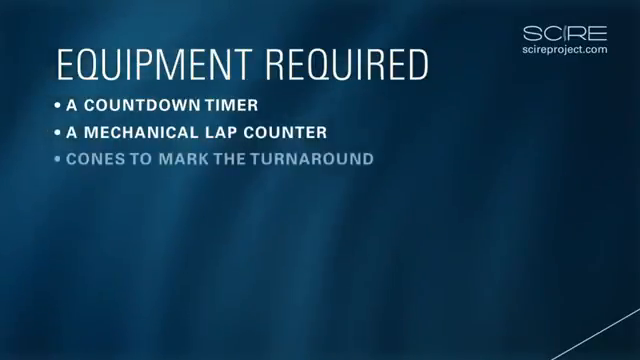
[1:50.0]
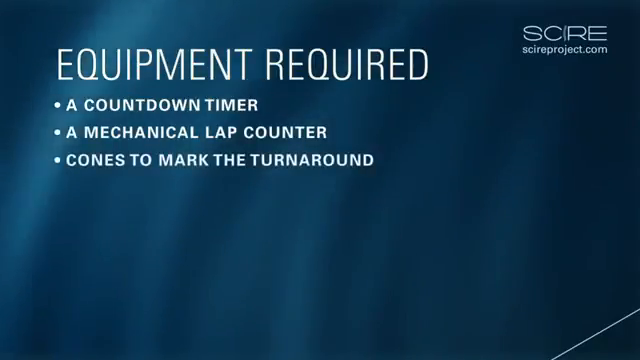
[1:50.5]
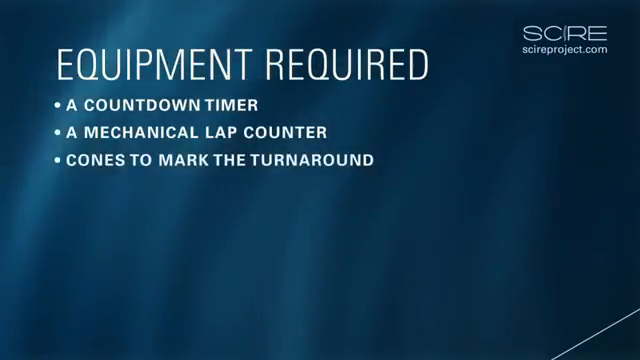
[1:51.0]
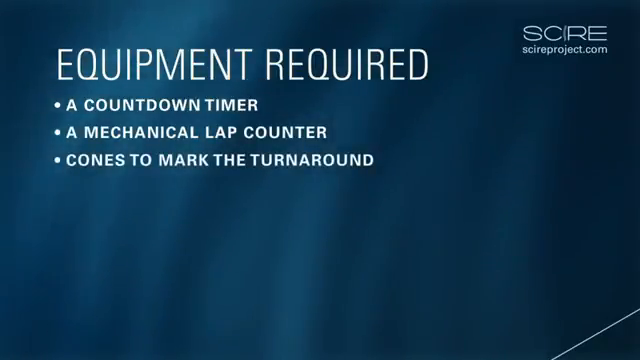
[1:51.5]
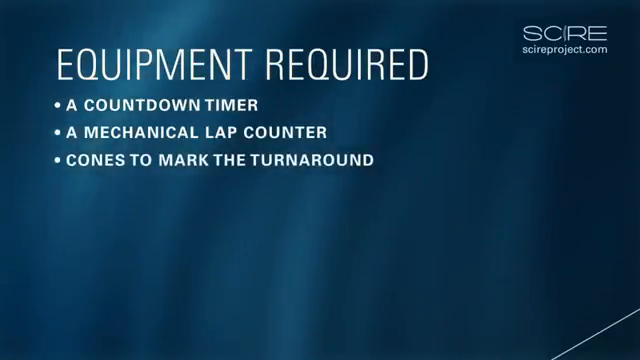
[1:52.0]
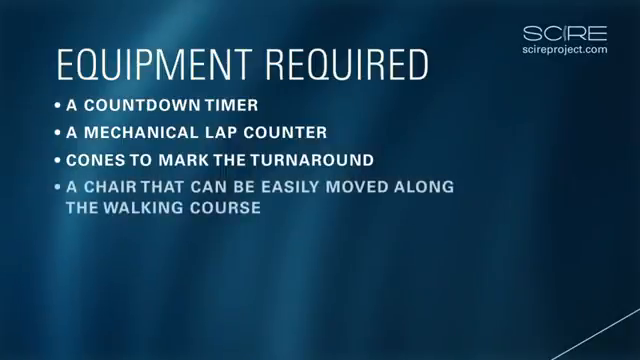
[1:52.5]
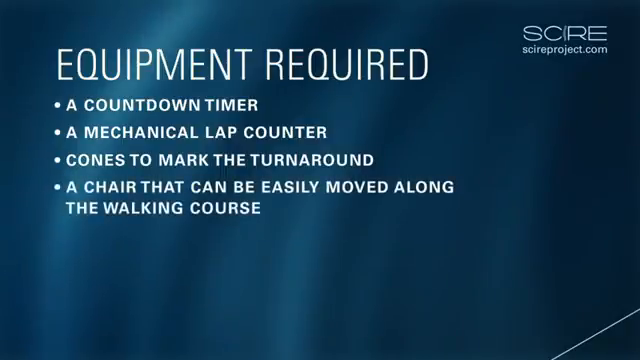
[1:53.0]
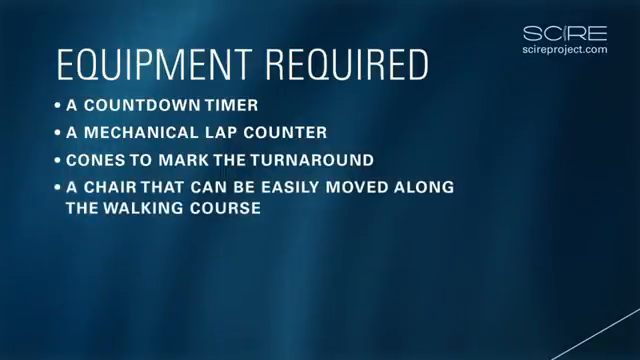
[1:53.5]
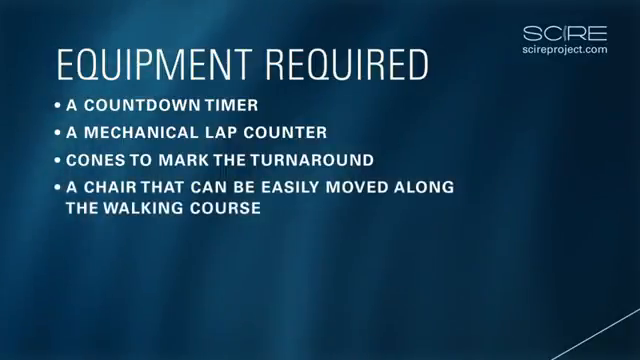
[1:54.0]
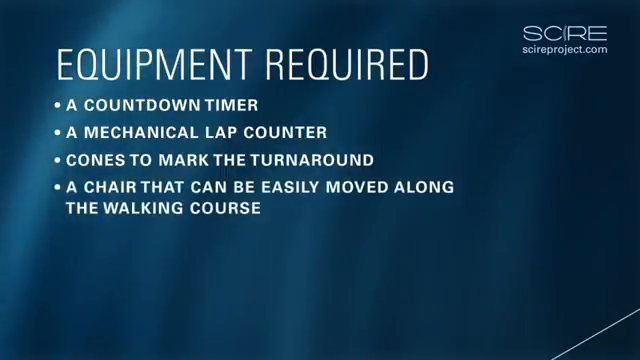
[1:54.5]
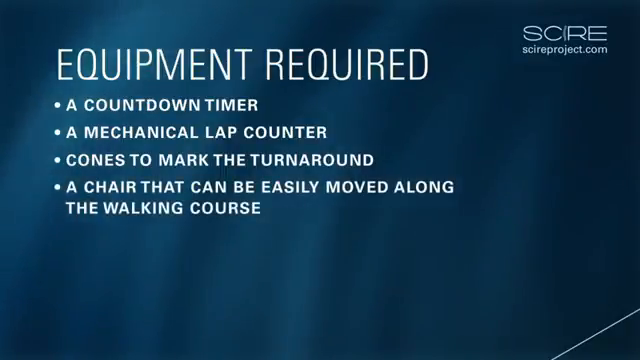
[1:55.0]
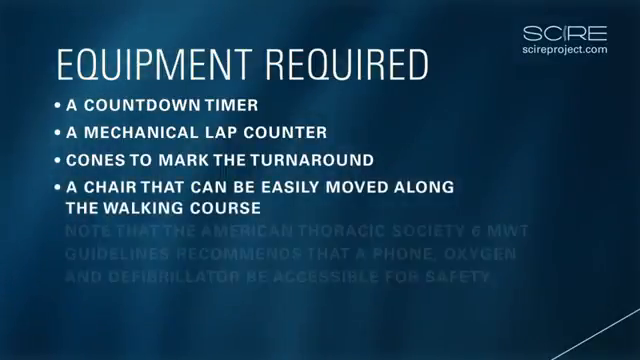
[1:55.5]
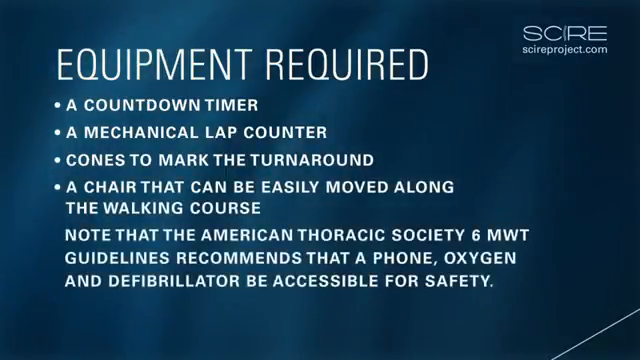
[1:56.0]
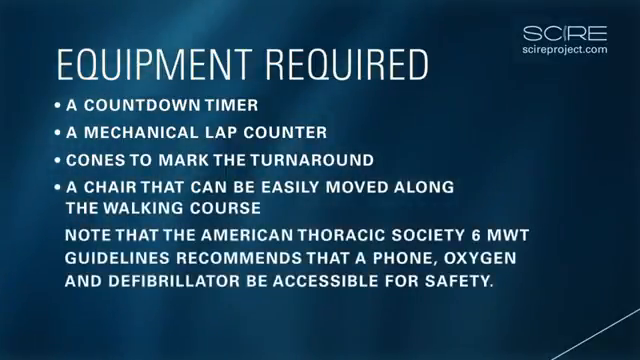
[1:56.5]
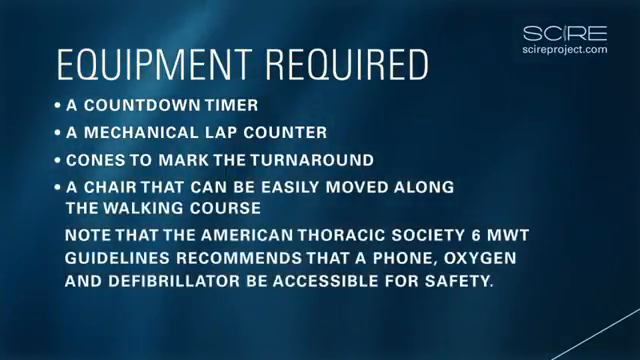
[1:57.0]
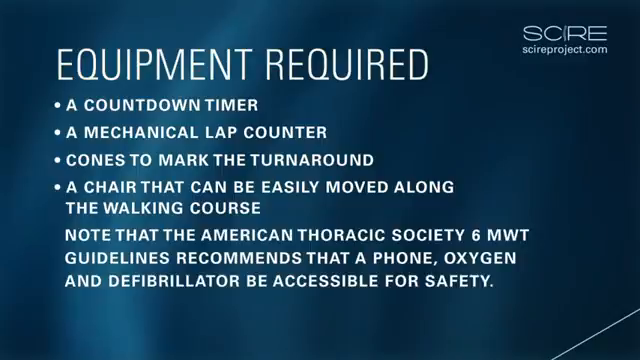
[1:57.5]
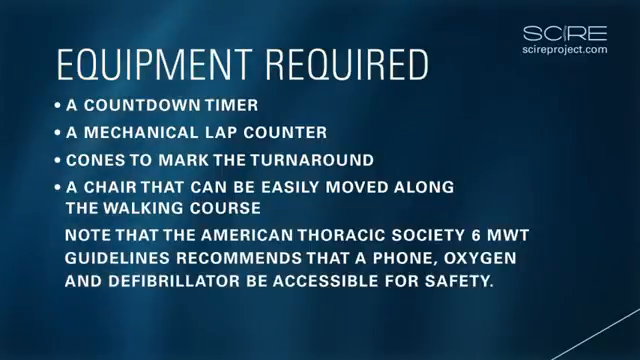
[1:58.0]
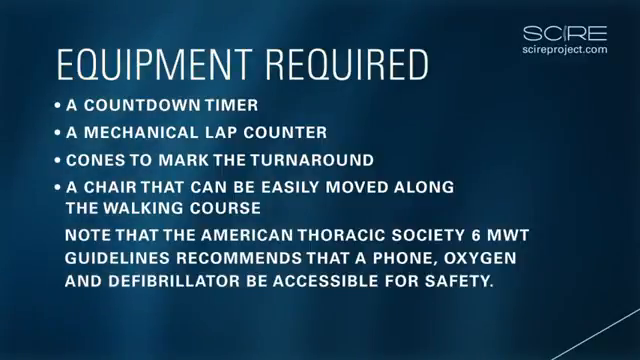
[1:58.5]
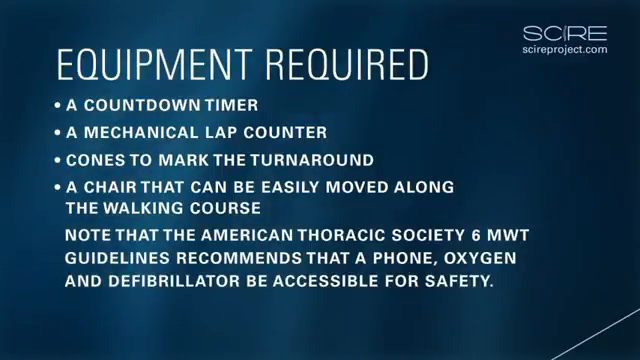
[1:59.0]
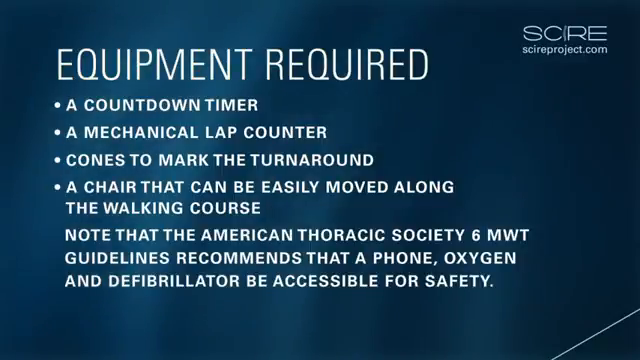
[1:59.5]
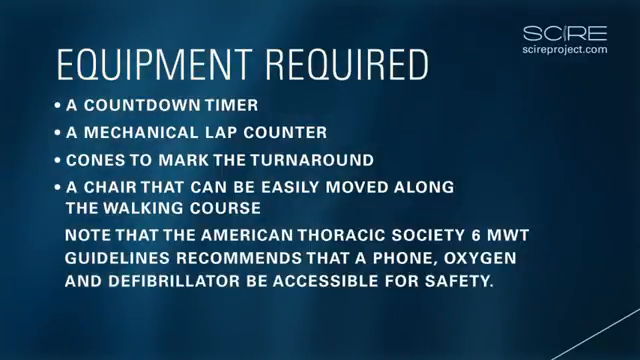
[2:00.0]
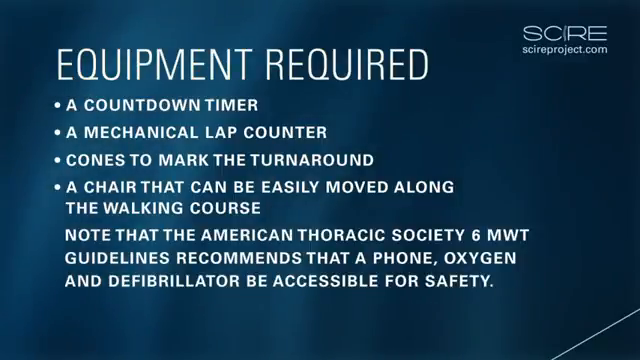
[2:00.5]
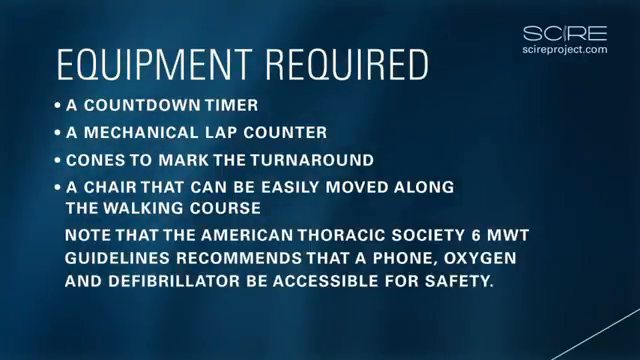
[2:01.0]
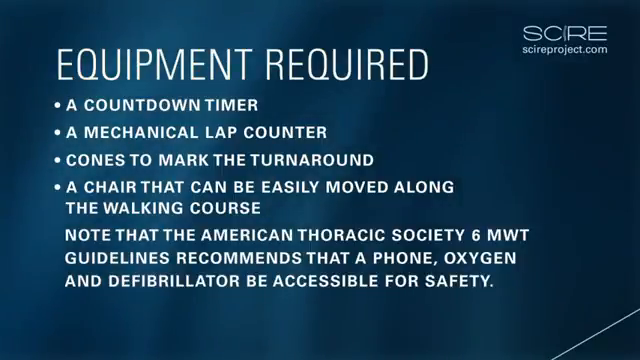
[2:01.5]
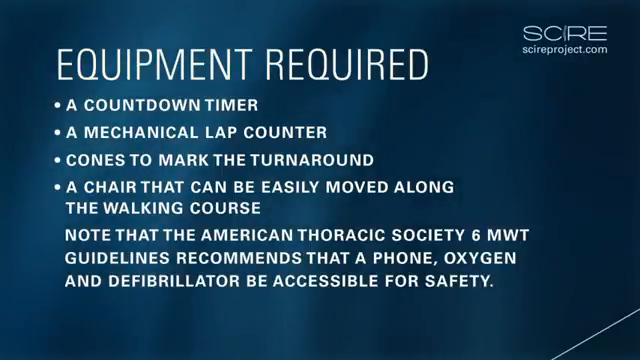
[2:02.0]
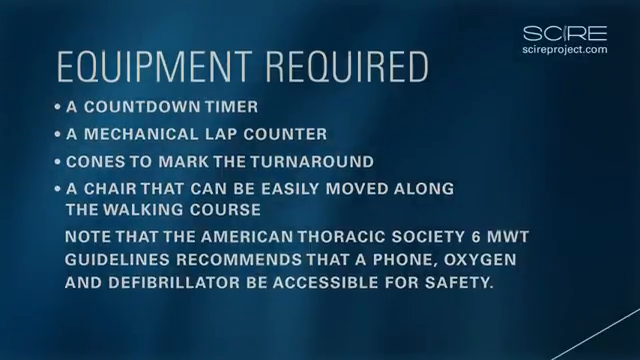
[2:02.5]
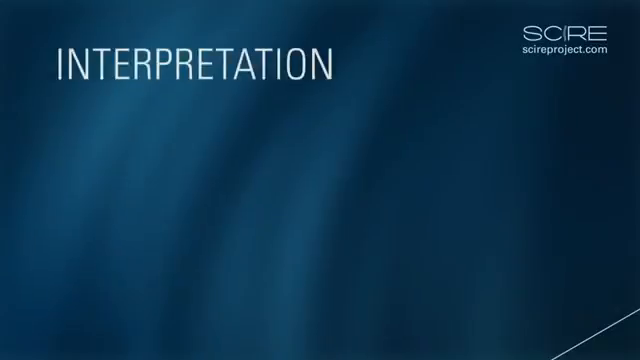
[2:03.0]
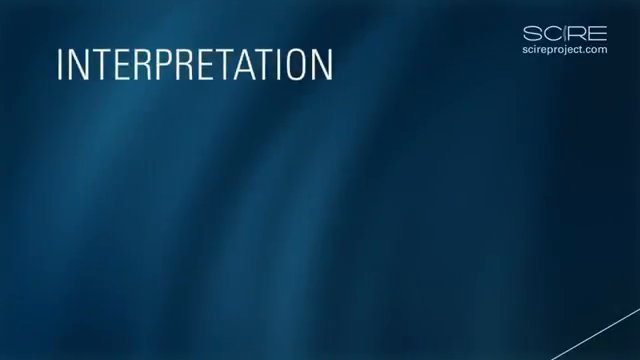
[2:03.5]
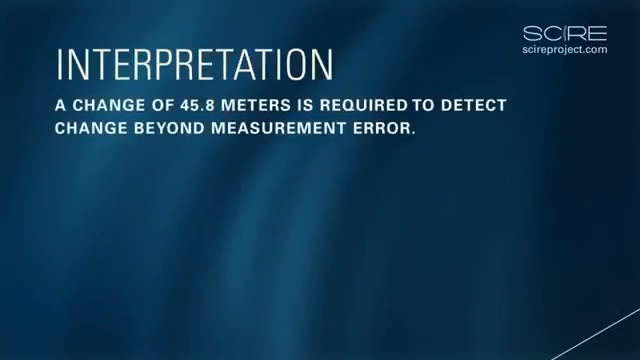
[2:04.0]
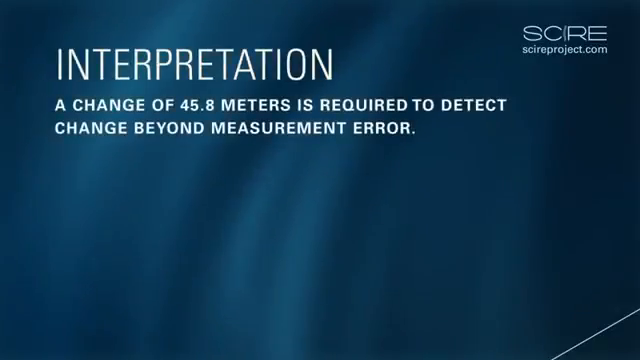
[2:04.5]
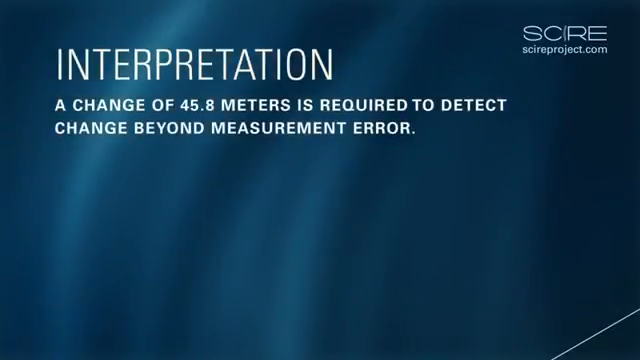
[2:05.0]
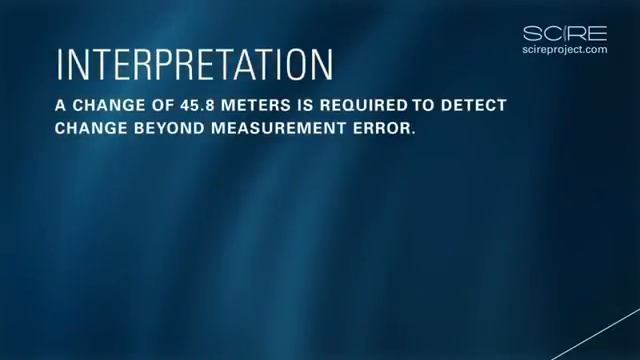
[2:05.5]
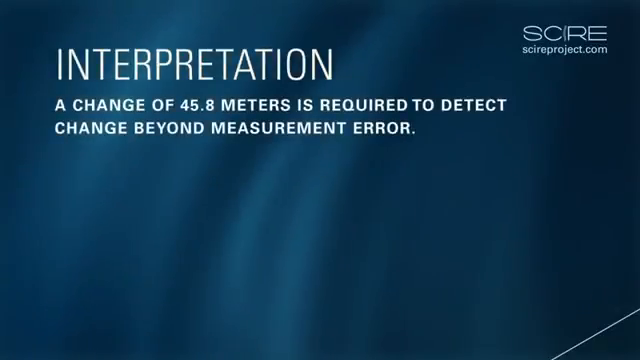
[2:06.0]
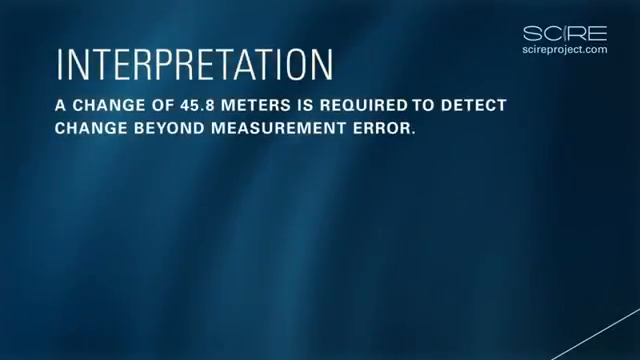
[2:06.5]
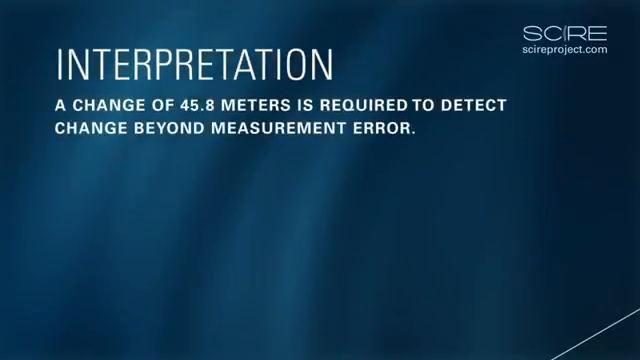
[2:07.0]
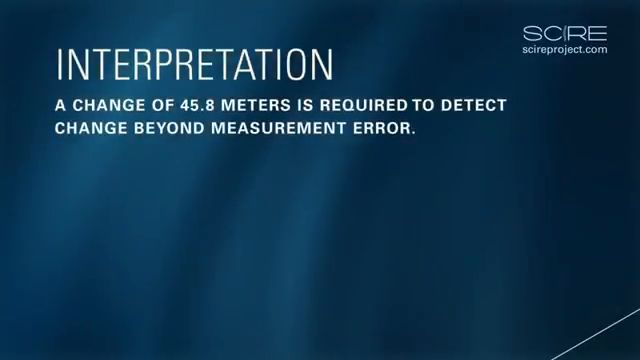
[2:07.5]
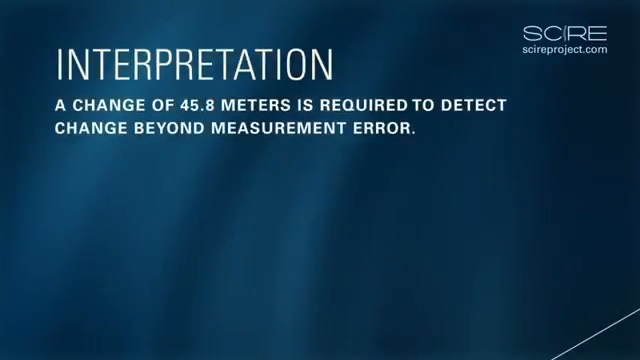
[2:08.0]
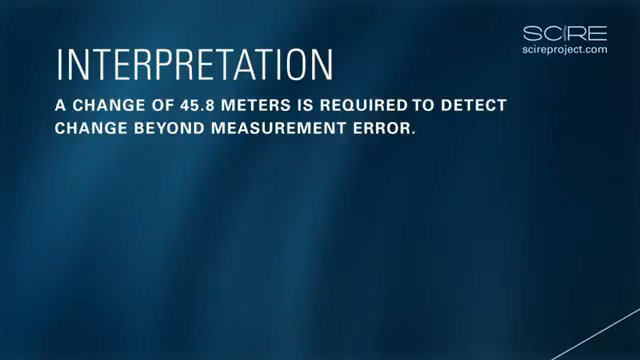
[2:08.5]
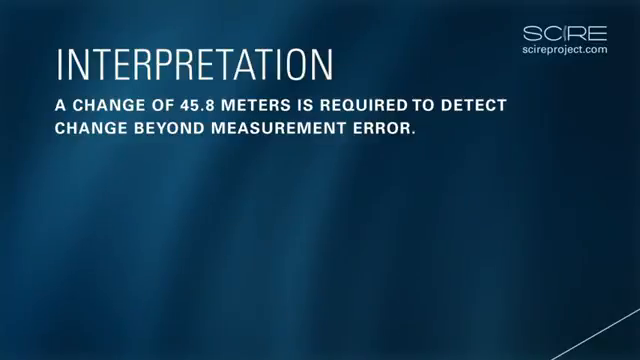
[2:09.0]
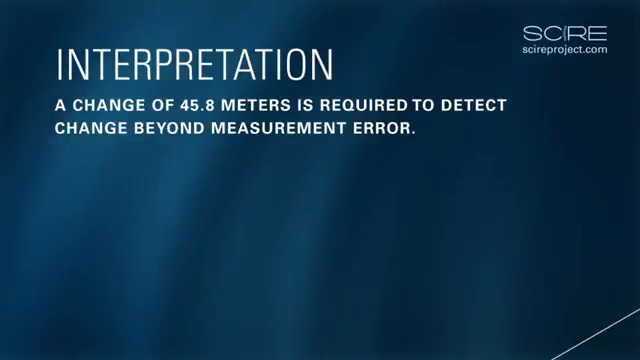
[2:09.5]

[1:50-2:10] A fourth bullet point appears reading "a chair that can be easily moved along the walking course". A note follows: "note that the American Thoracic Society 6 MWT Guidelines recommend that a phone, oxygen and defibrillator can be accessible for safety". Another screen then appears headed "interpretation", reading "a change of 45.8 meters is required to detect change beyond measurement error". The text is in a white font. The logo remains in the top right corner, reading "S.C.R.E" with an I in the middle that looks a bit like a parenthesis but less sharp, like a mildly slanted I, and the website address is still underneath it.